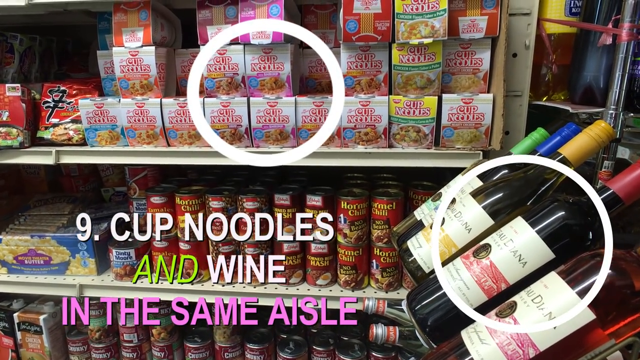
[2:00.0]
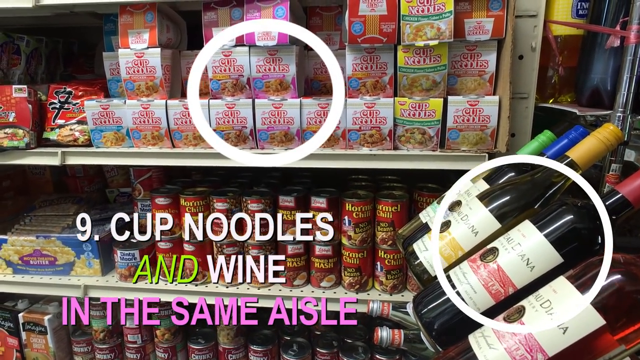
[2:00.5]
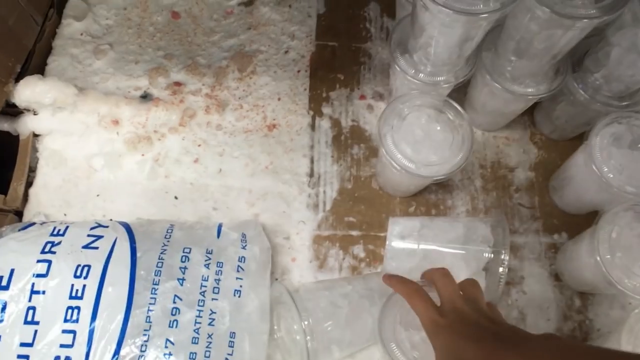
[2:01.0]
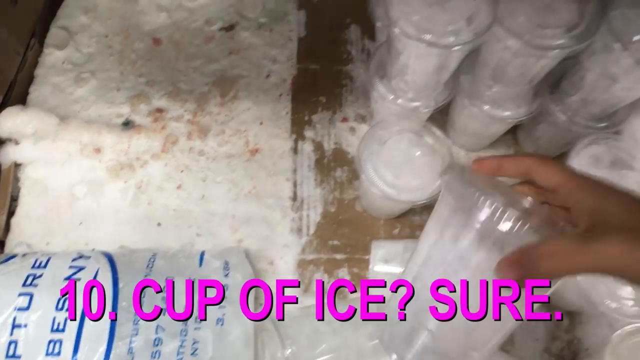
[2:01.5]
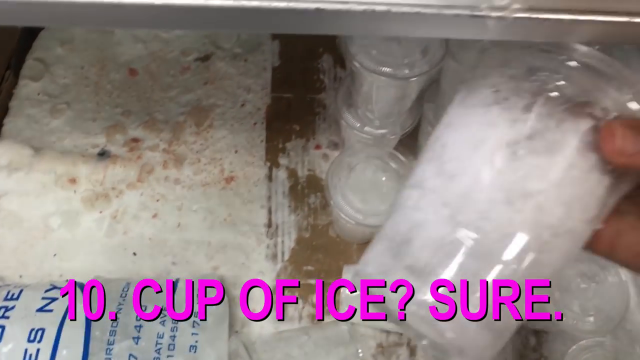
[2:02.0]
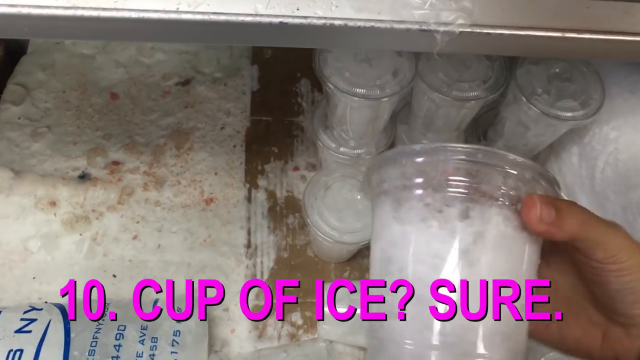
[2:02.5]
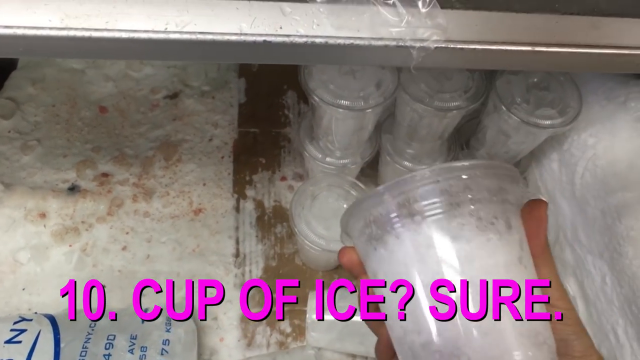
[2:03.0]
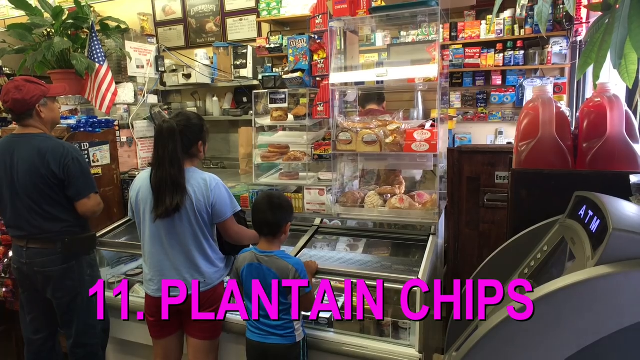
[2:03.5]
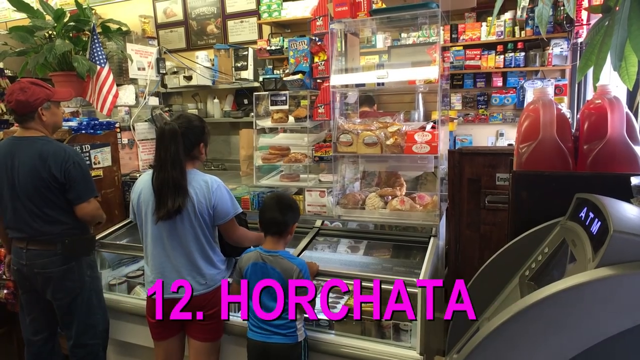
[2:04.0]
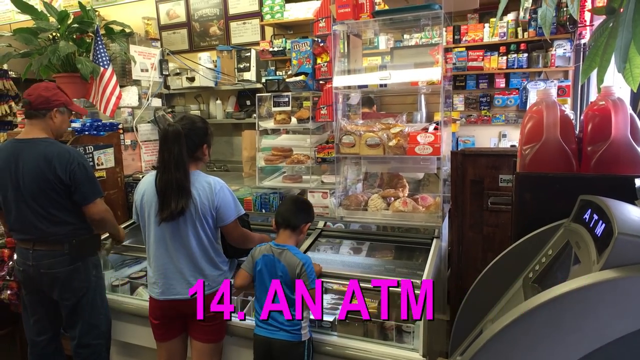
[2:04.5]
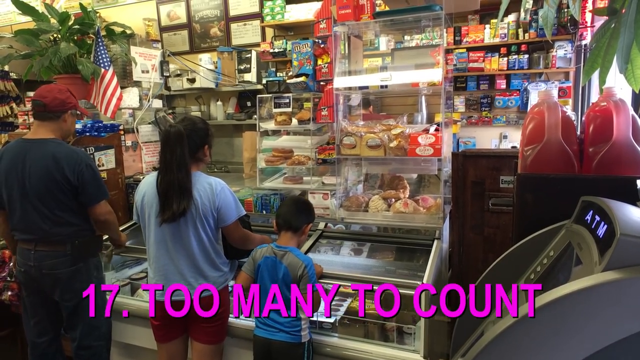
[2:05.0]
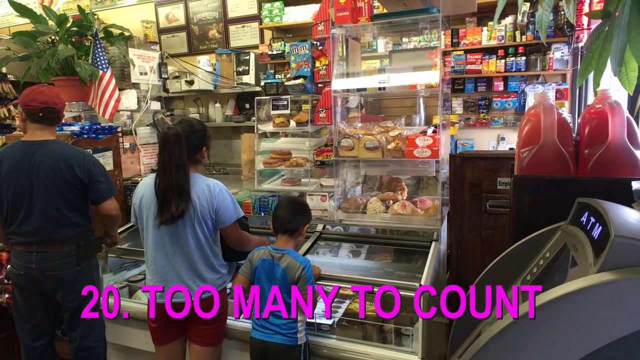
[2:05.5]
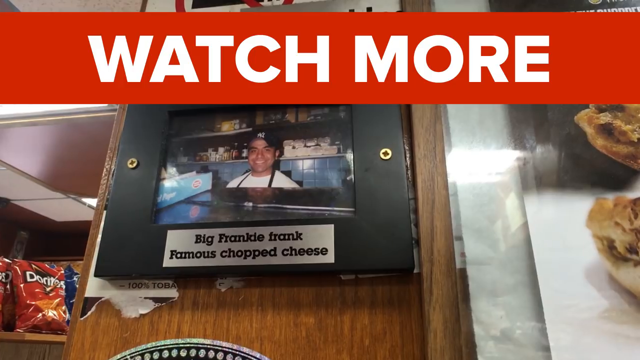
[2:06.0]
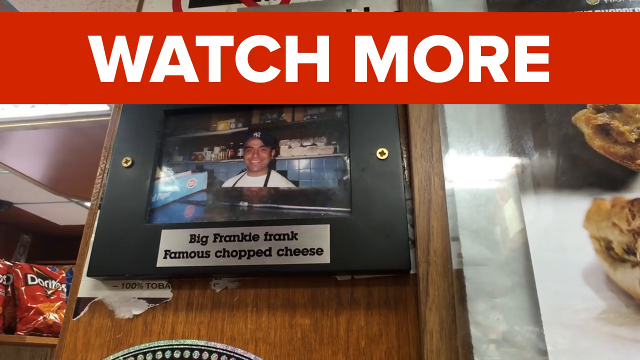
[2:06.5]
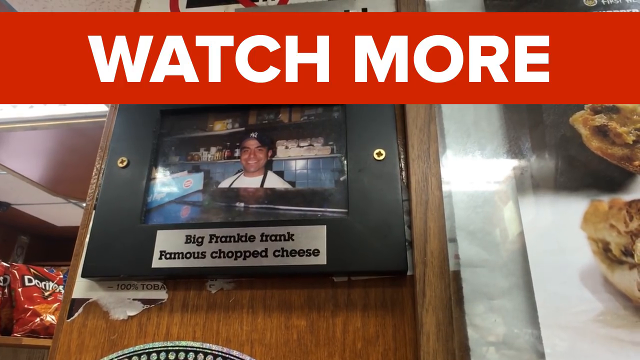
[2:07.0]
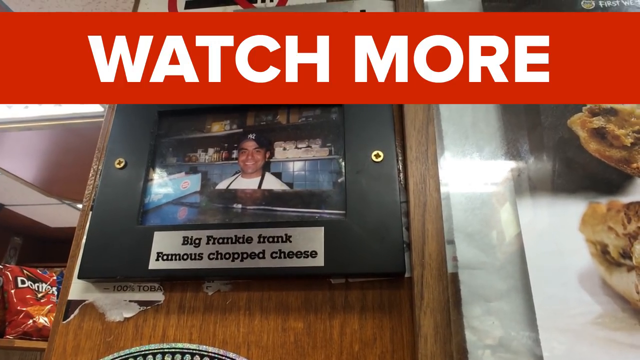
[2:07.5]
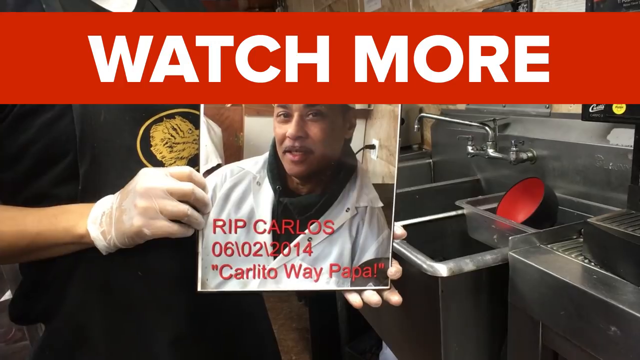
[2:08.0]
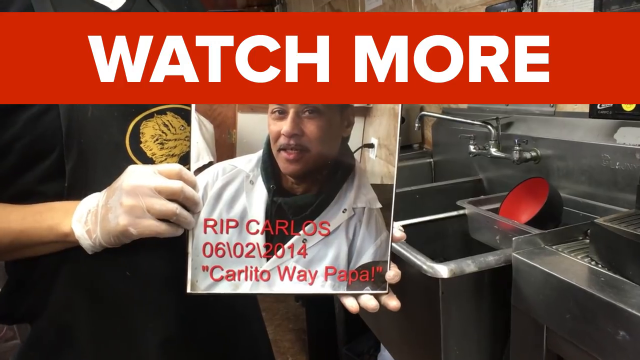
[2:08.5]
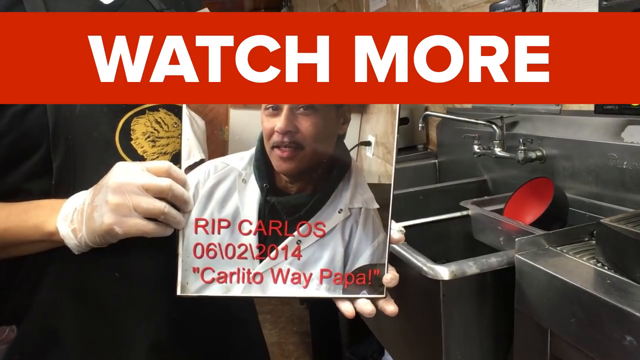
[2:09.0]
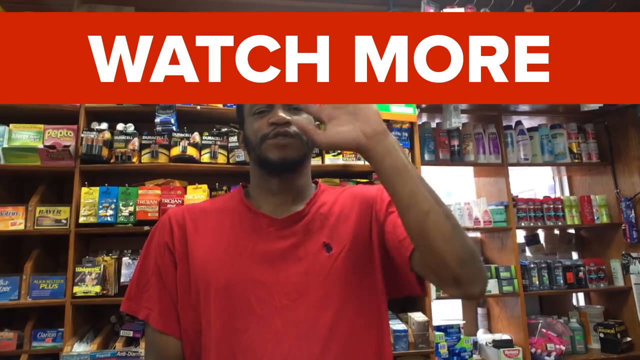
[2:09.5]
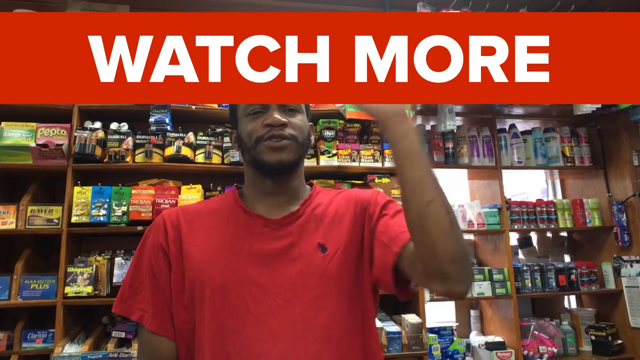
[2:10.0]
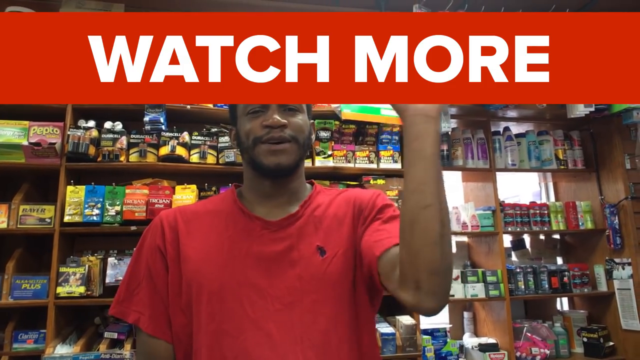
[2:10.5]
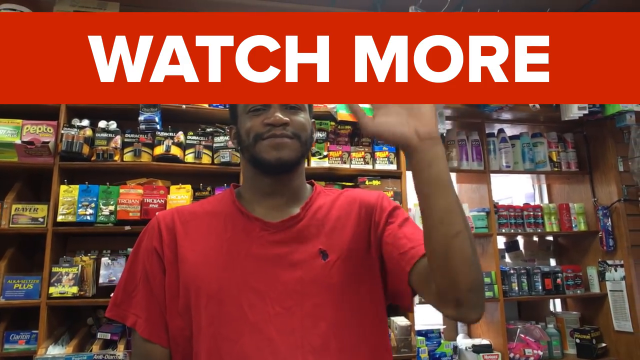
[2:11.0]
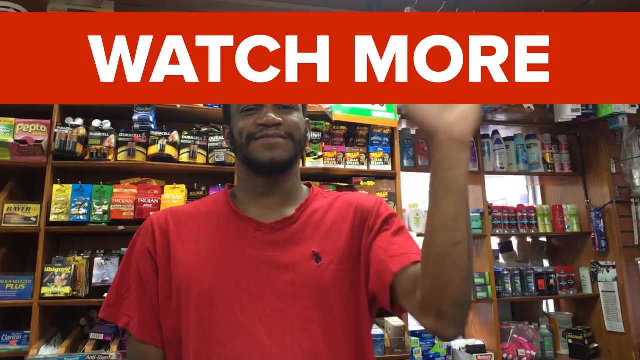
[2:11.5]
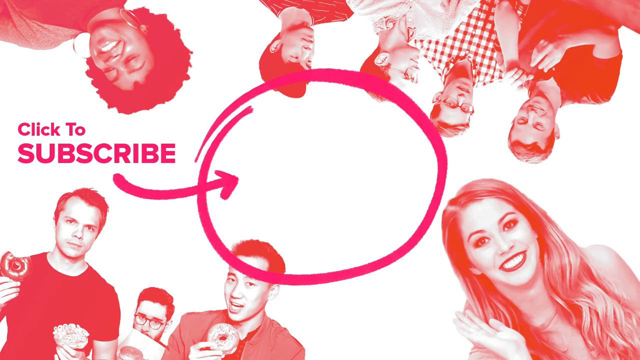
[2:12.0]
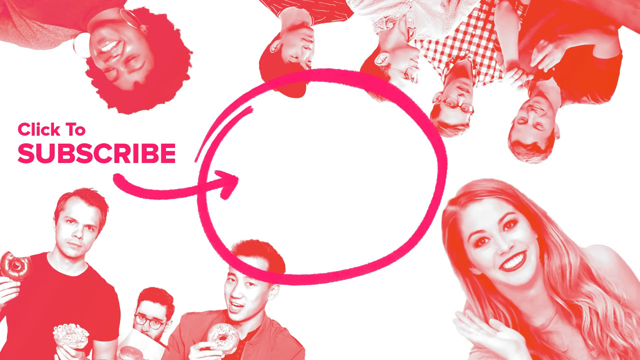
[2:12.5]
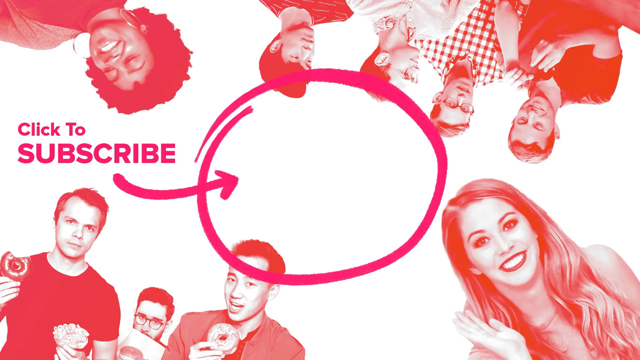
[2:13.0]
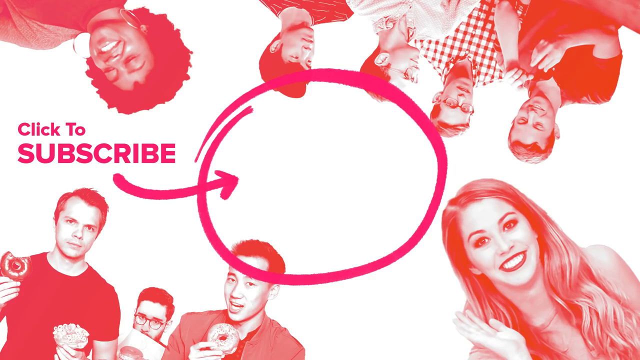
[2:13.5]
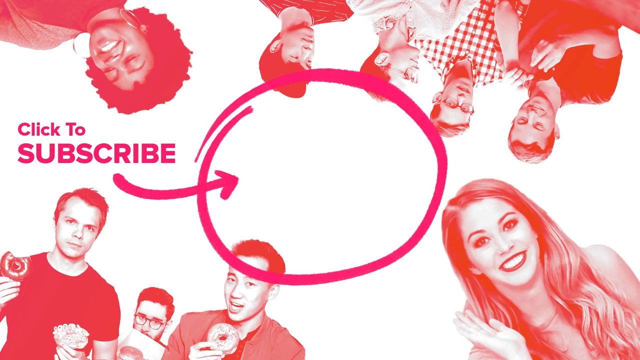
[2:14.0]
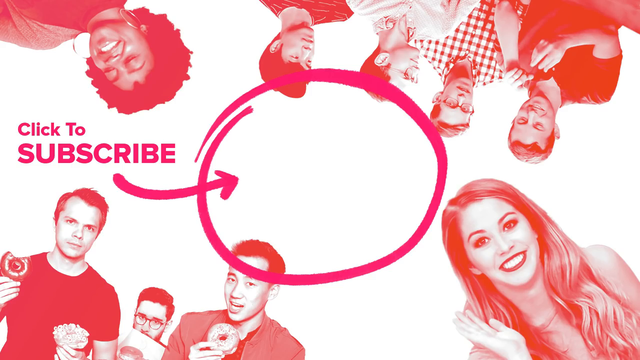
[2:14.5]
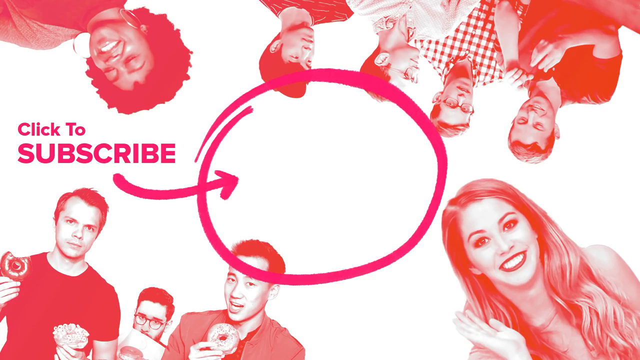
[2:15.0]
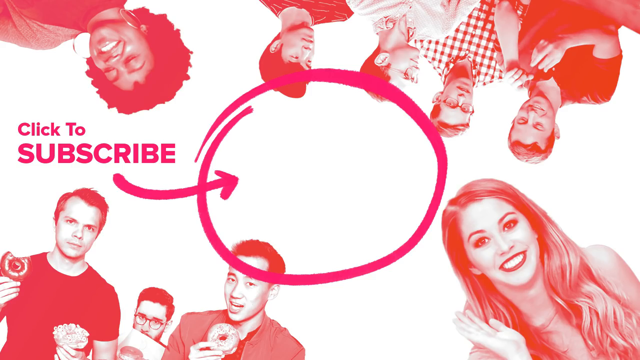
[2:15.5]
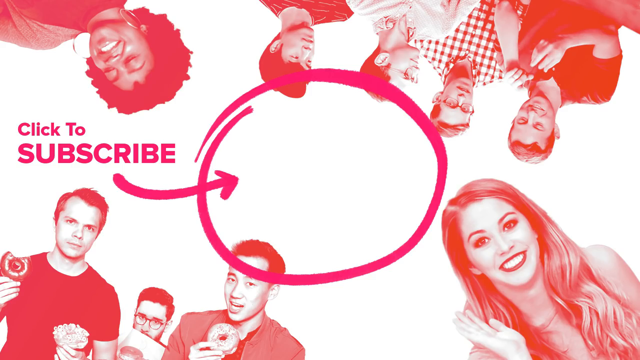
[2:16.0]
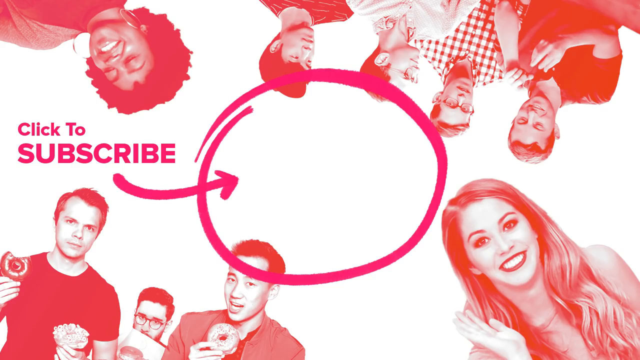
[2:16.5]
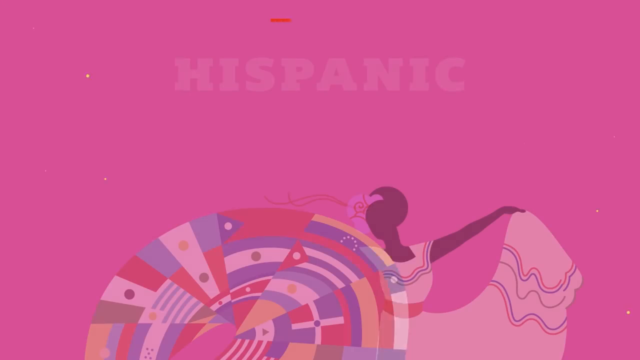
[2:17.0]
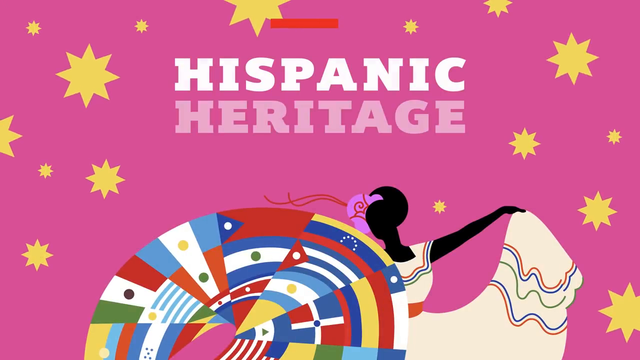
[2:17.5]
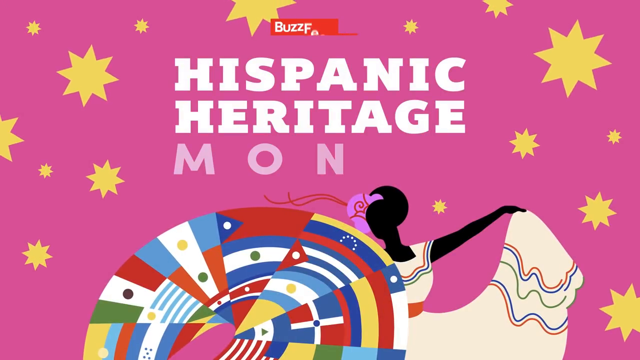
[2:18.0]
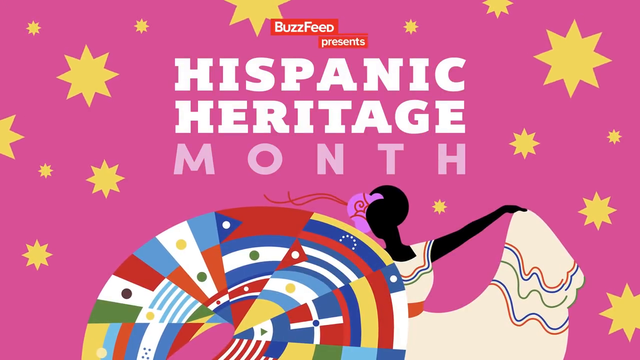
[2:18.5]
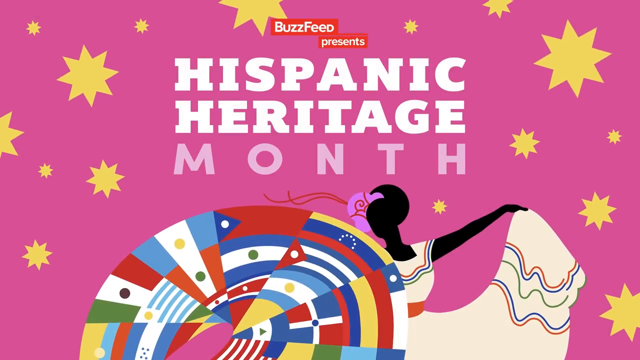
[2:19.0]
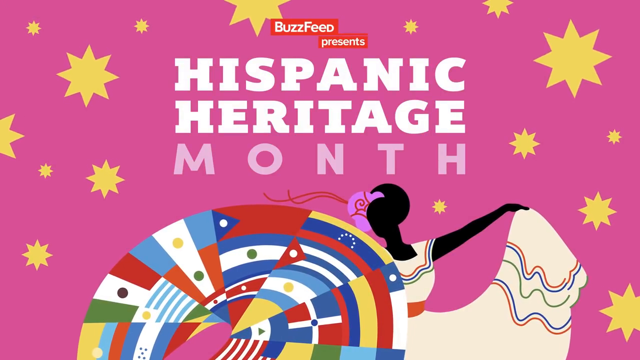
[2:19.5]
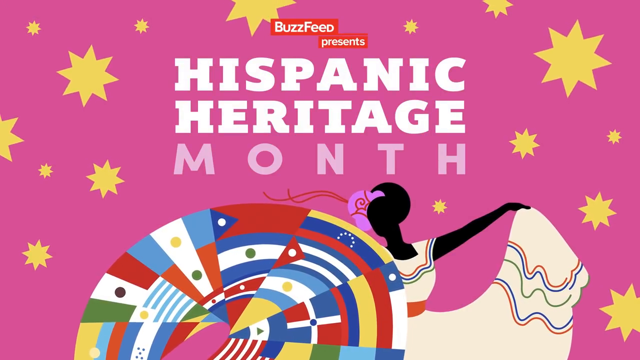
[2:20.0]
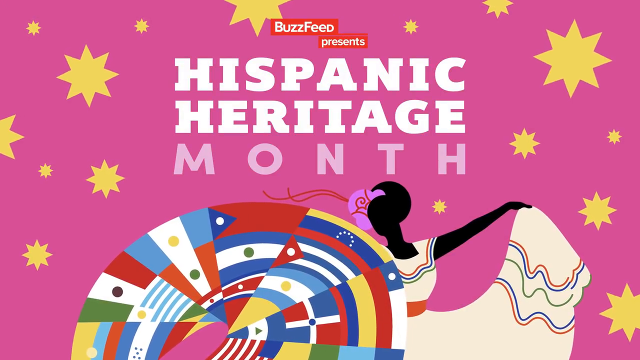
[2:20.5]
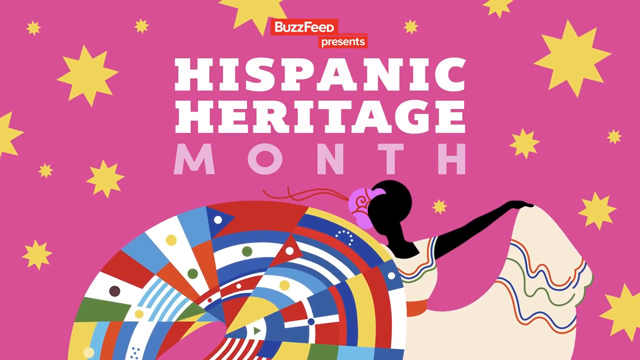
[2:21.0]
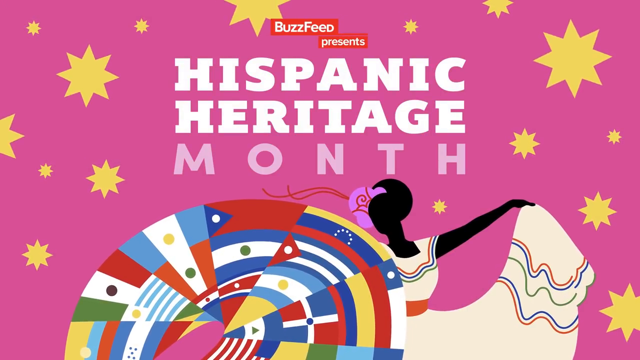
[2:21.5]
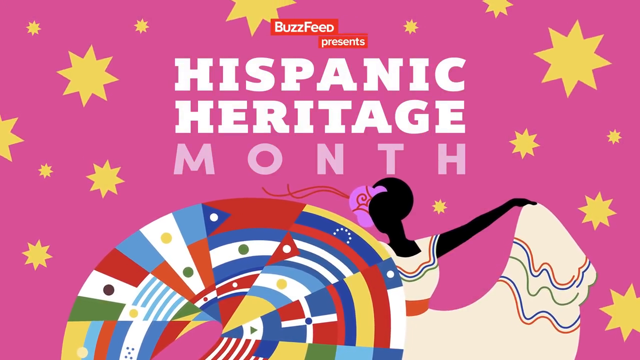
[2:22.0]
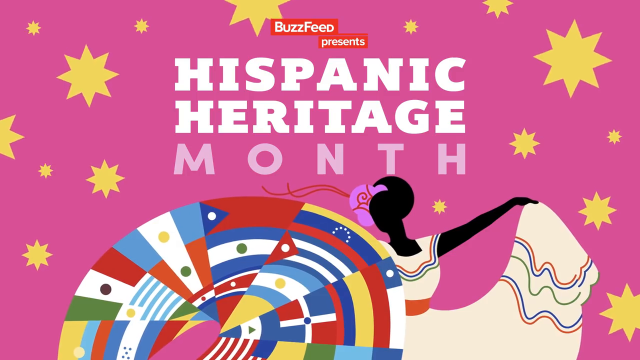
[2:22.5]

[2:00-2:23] Cup noodles and wine are shown in the same aisle, with text in white numbered nine, followed by wine bottles. Text reading "10" and "cup of ice" appears, and ice placed in cups is shown. Many screen changes follow, up to number 24. A screen reads "watch more" in white capital letters on a red background, followed by a picture of a person with chopped cheese and "R.I.P. Carlos". The man in the red t-shirt waves bye-bye. A "click to subscribe" screen appears with a circle in the middle and people's heads showing, which are being touched. A pink screen follows with different flags and an art-drawing-like lady wearing a dress with blue and red lines, with yellow stars that are moving. "BuzzFeed presents" is written in white font on a red background. The view zooms in on the female near the flags.